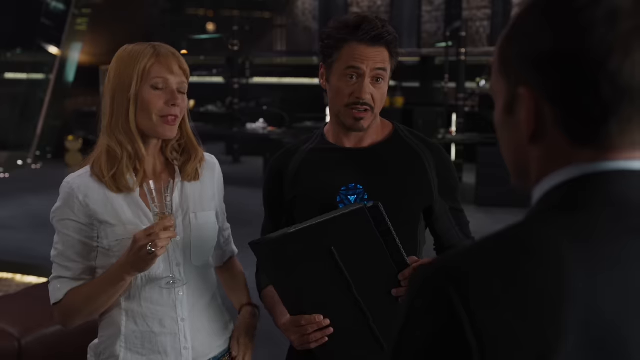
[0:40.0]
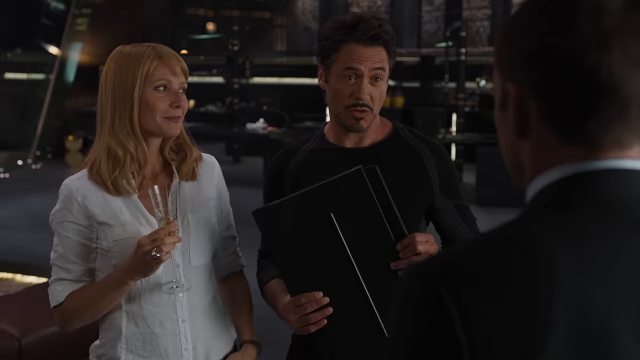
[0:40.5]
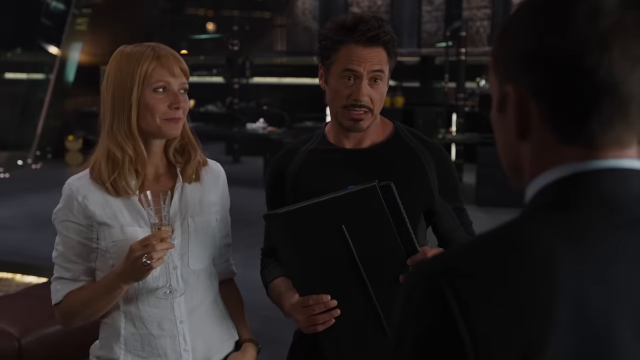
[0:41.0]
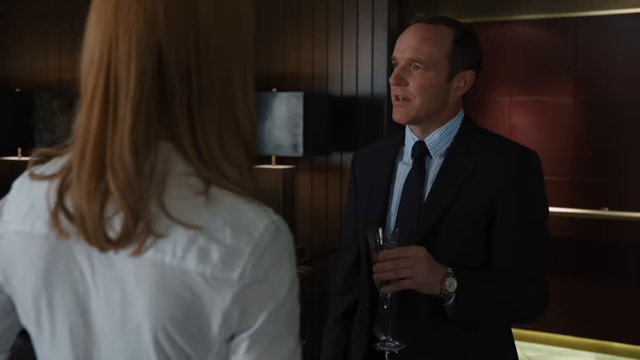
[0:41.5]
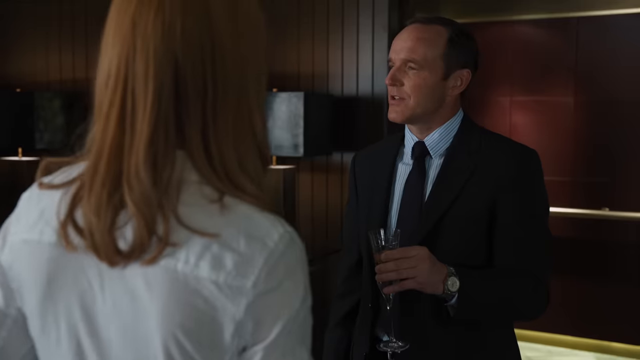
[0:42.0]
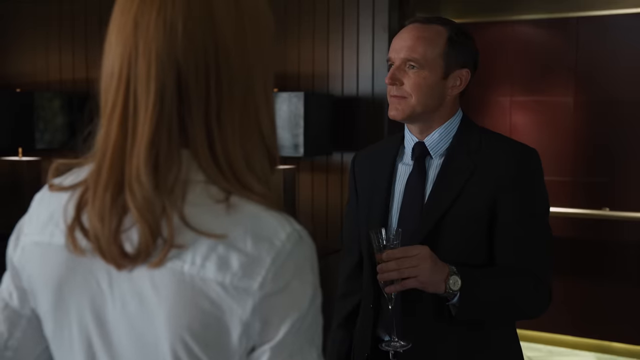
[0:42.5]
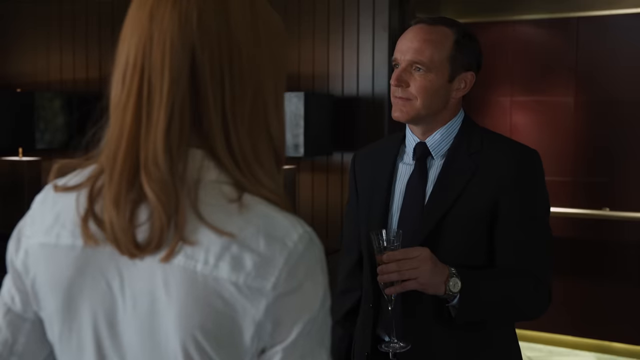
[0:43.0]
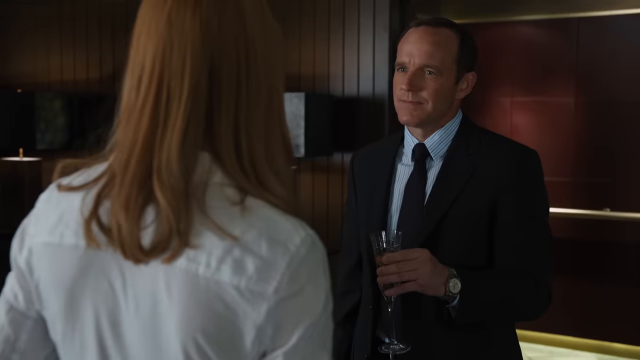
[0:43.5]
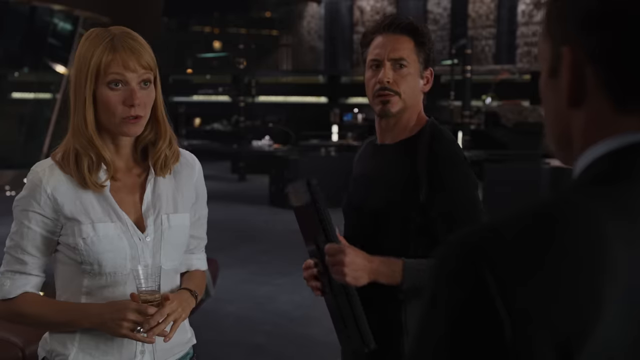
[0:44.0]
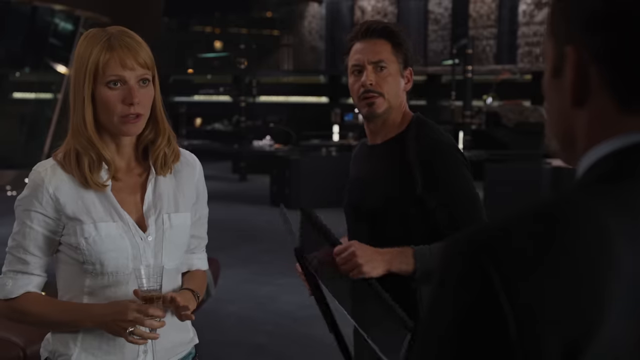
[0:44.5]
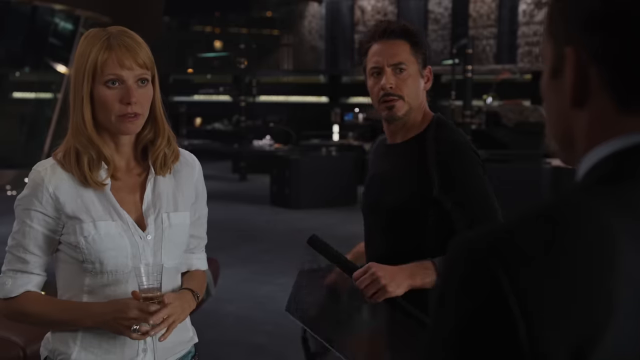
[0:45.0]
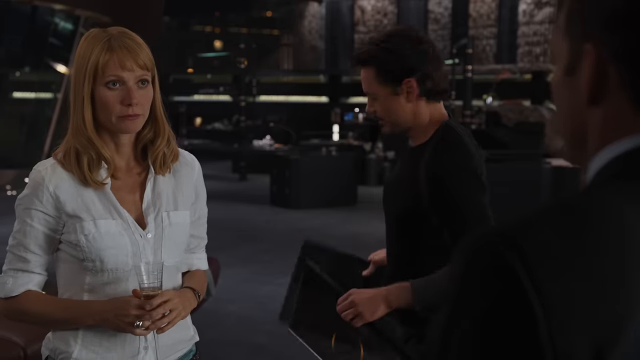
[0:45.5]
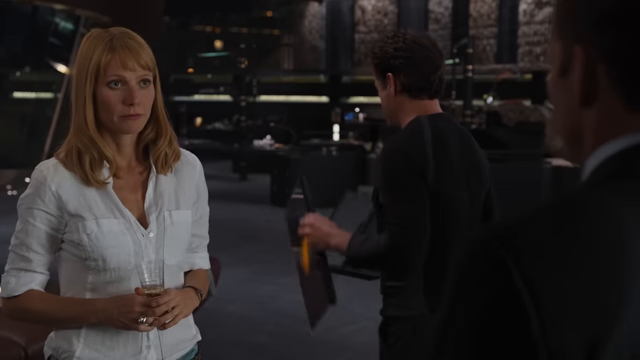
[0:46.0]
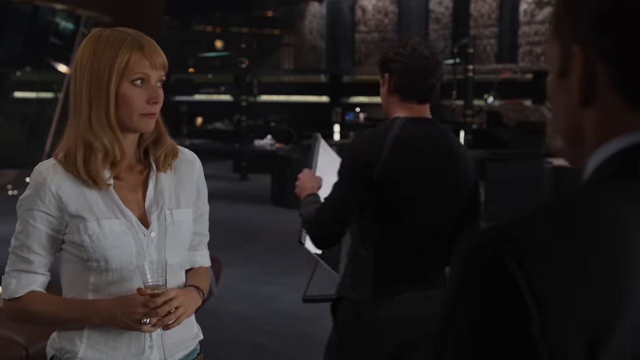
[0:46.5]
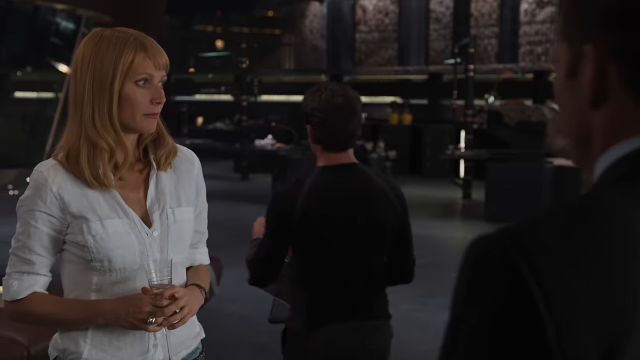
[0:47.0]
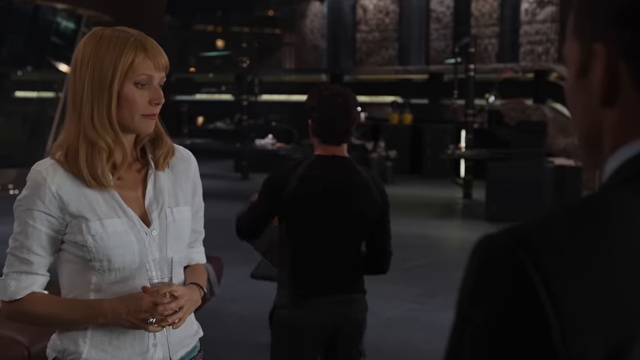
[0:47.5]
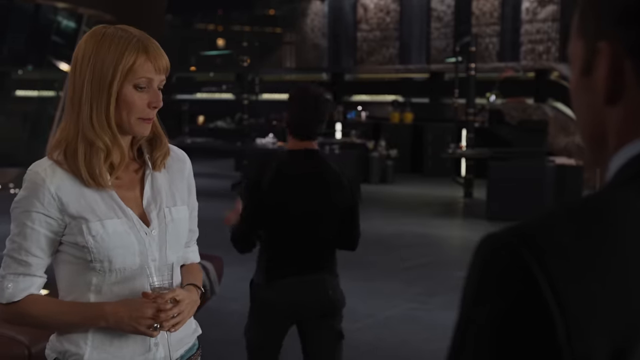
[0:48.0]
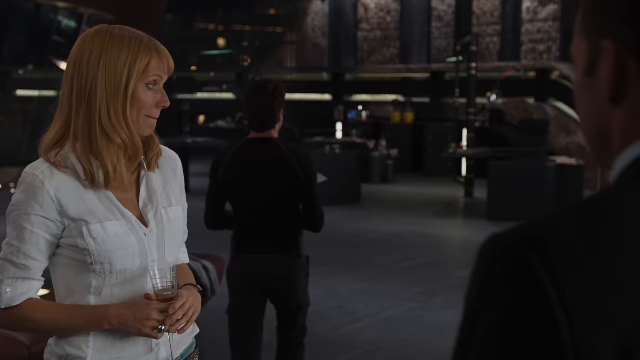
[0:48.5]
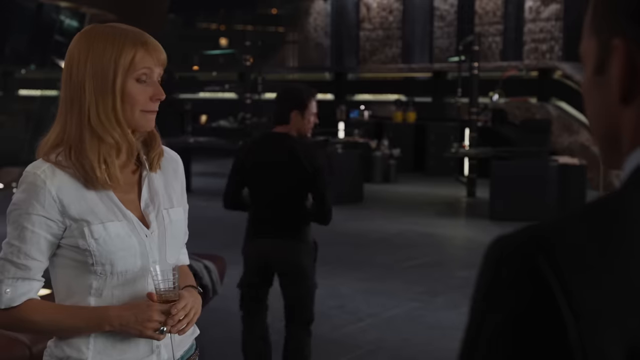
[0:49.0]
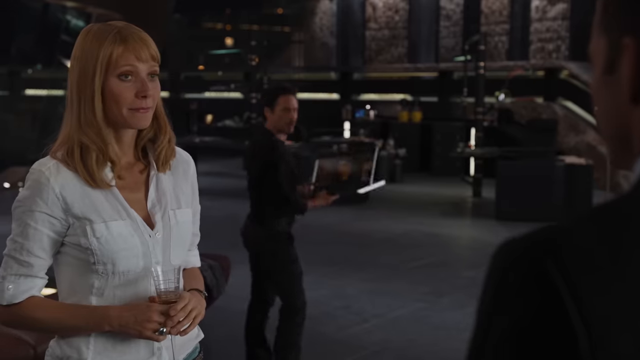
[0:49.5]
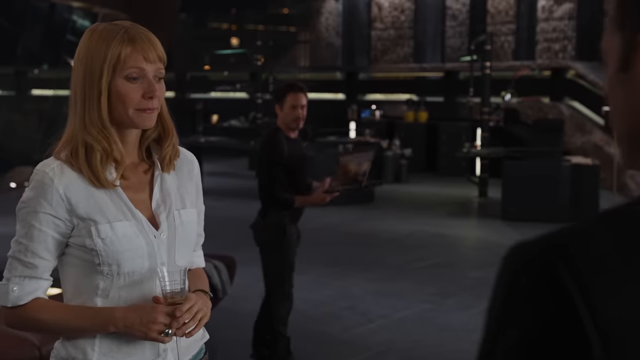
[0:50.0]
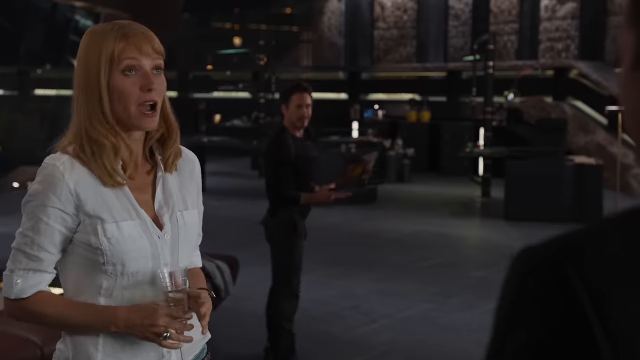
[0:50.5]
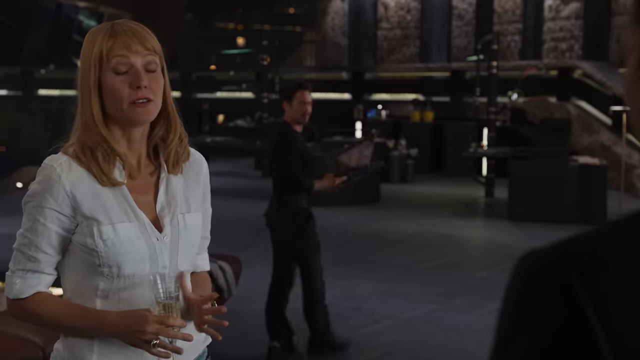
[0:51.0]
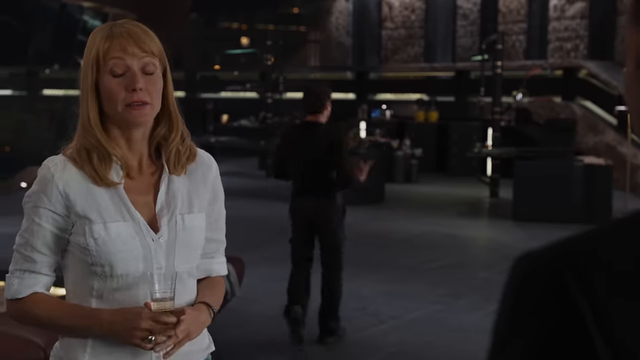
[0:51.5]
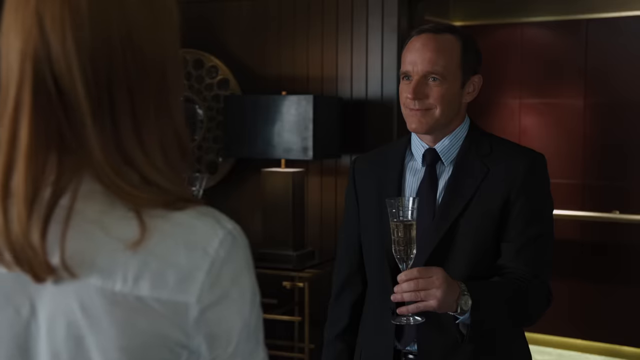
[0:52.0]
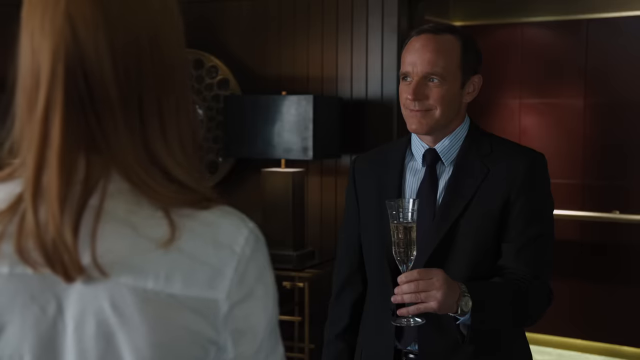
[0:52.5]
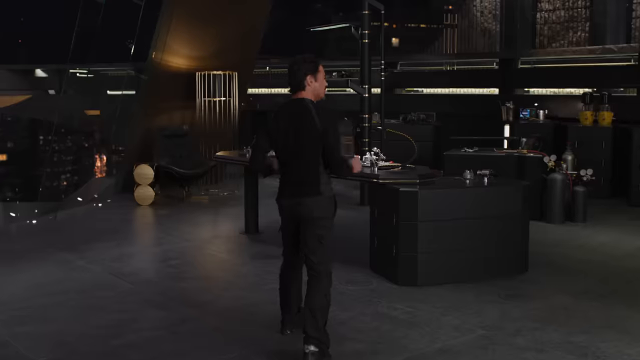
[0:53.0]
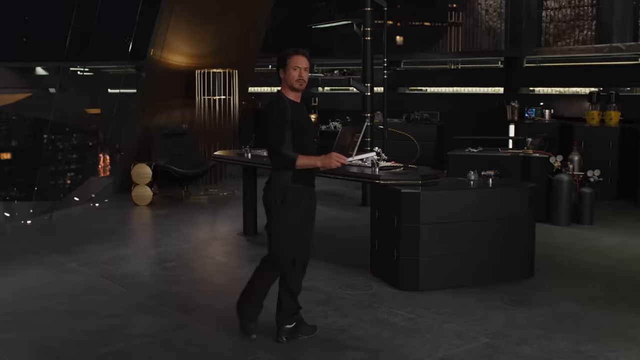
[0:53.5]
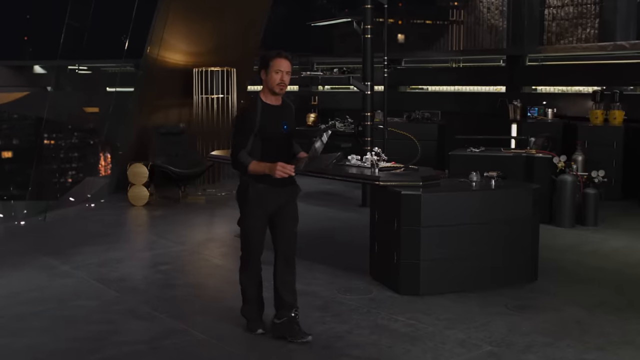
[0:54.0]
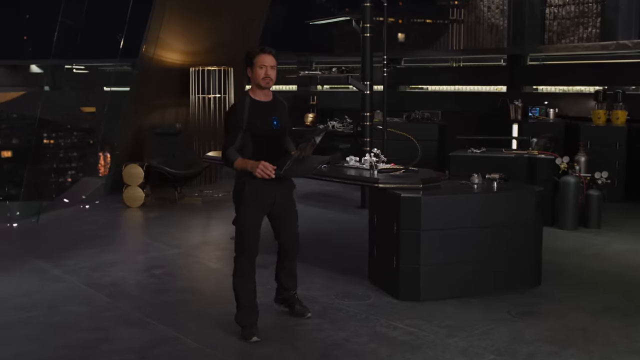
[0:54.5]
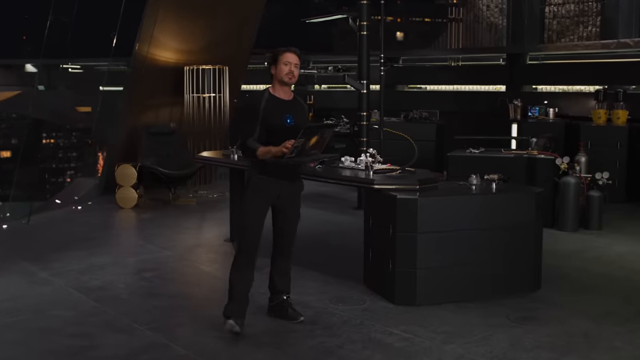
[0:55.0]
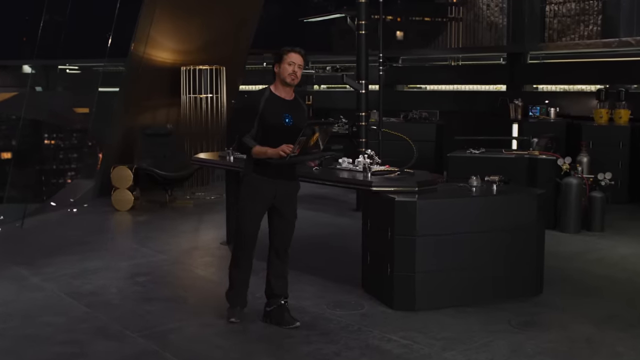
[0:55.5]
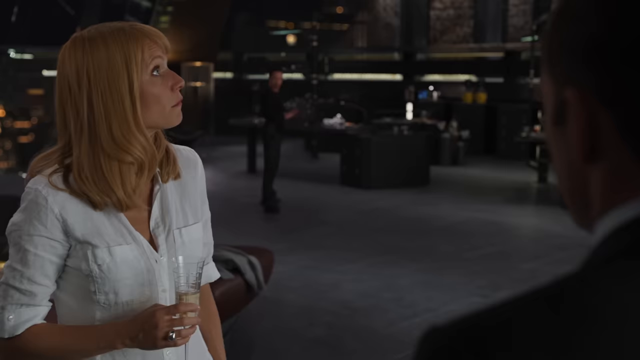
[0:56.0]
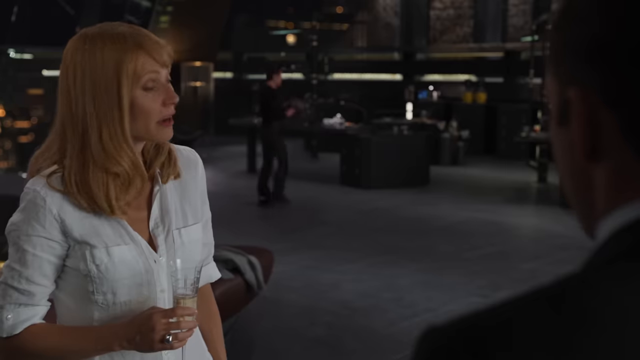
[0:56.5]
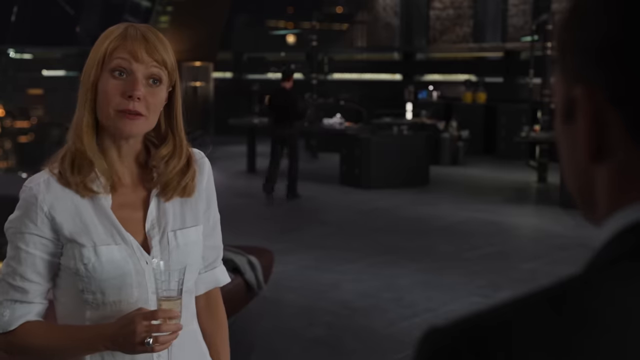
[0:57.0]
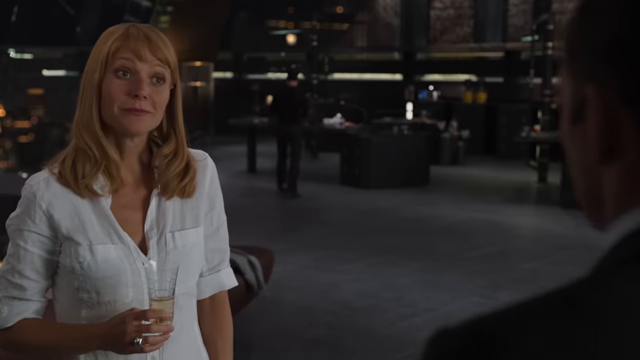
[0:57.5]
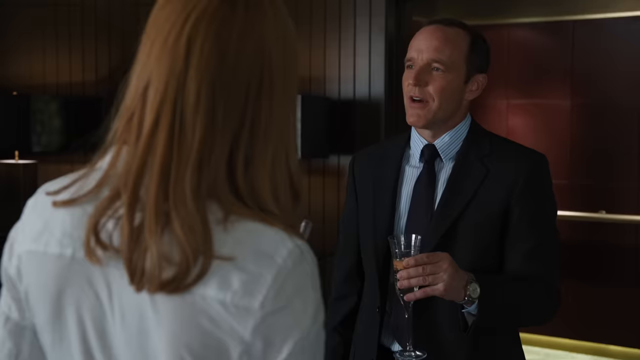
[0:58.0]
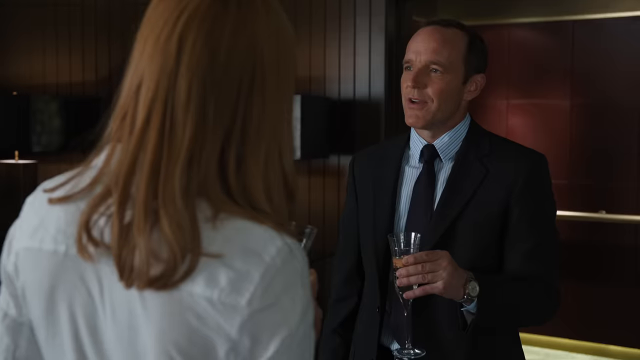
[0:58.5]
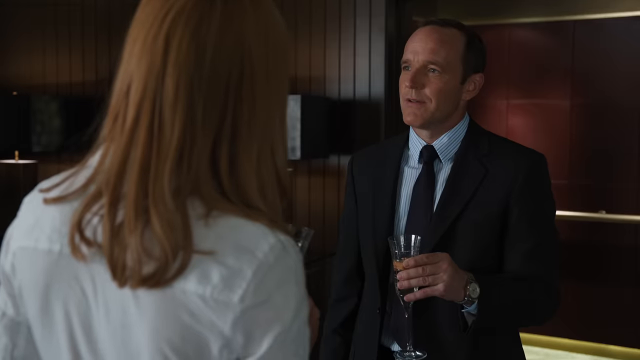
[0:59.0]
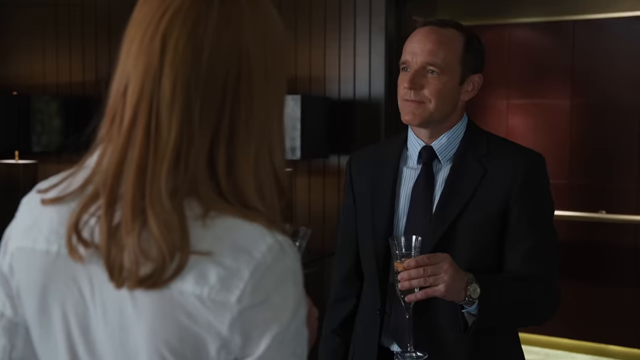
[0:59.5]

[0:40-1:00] The movie shows Robert Downey Jr. with other actors. The lady on the viewer's left has red hair and dark eyes; she wears a white top with blue jeans and holds a glass of either wine or champagne. In the middle is Robert Downey Jr., in his mid-50s, with black hair, dark eyes, a mustache and a goatee. He wears a long-sleeved black shirt with a circular emblem on it that has a triangle turned to the side in the middle, and black pants, and he holds some type of black object. The gentleman who just came in has his back to the camera; he wears a black suit and has brown hair and is in his mid-50s.